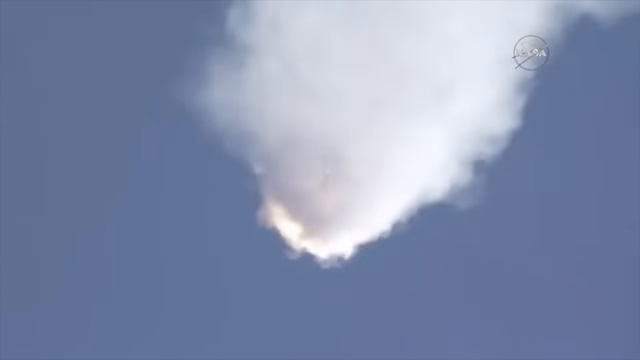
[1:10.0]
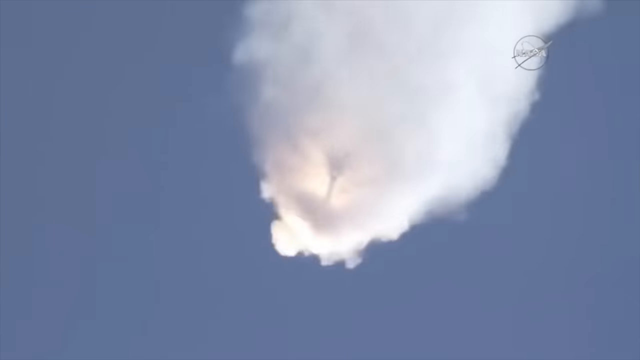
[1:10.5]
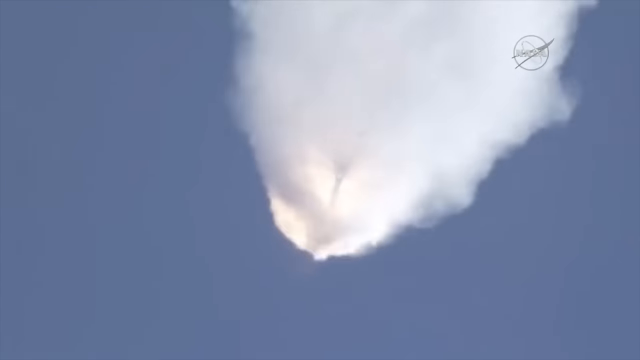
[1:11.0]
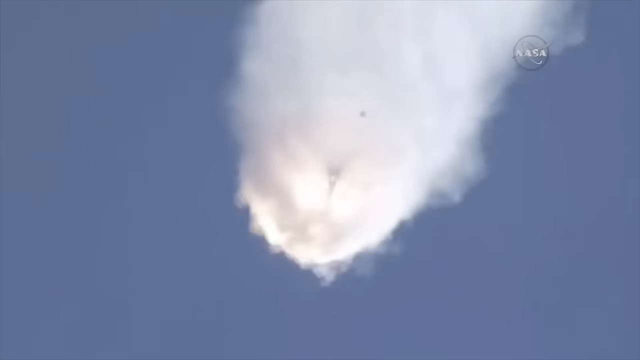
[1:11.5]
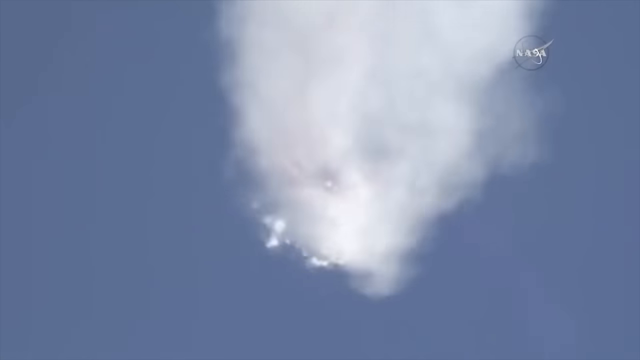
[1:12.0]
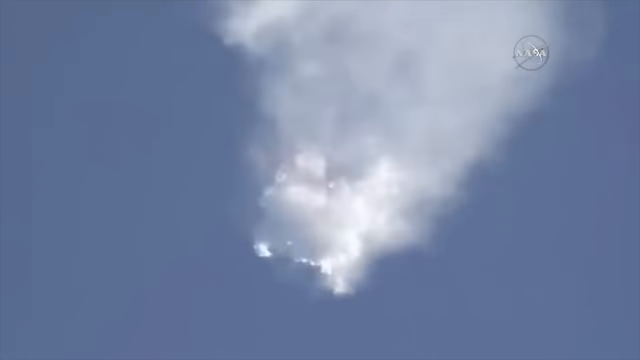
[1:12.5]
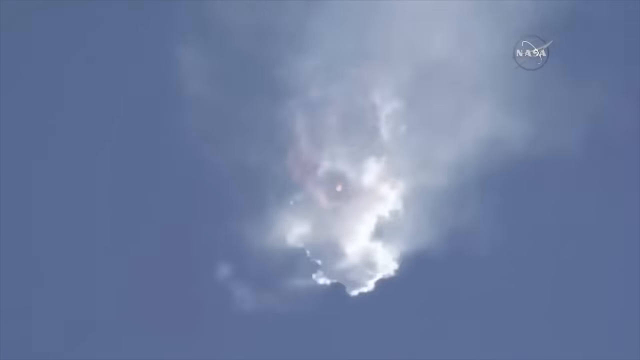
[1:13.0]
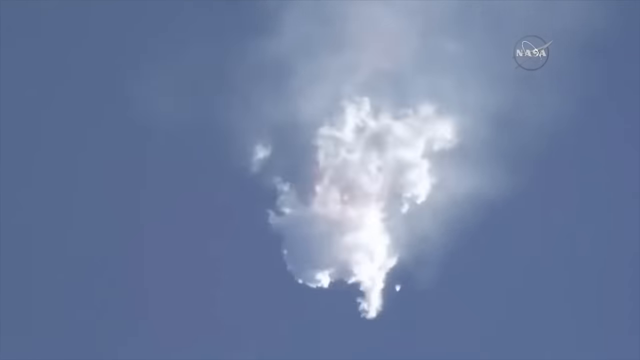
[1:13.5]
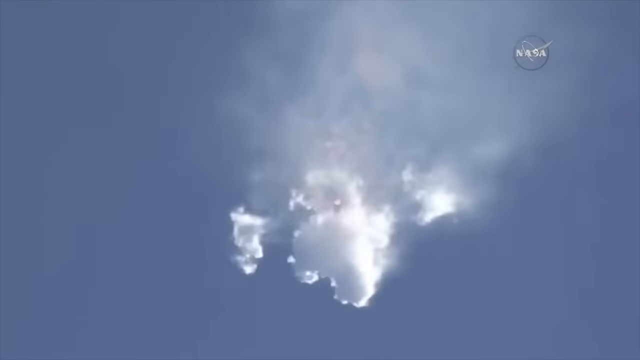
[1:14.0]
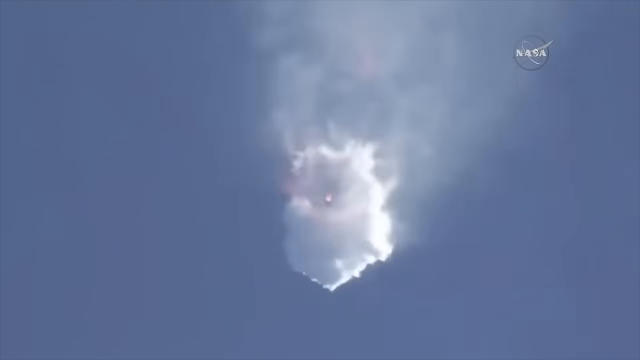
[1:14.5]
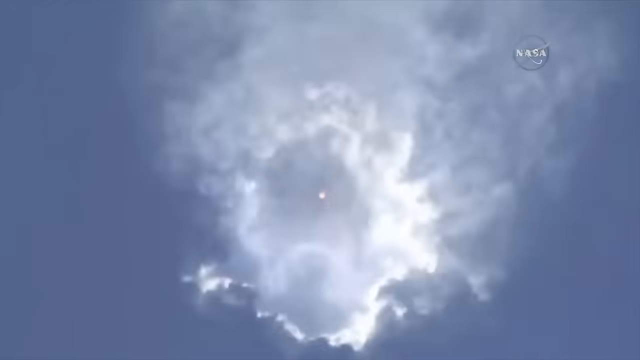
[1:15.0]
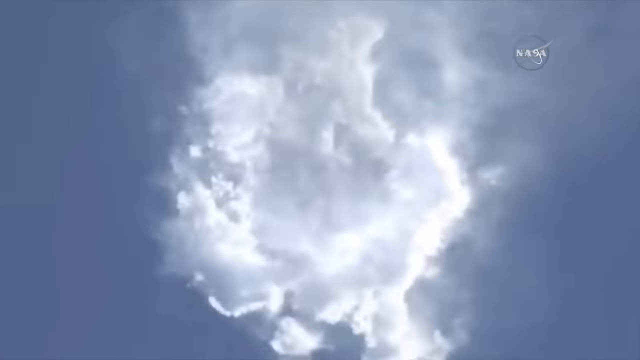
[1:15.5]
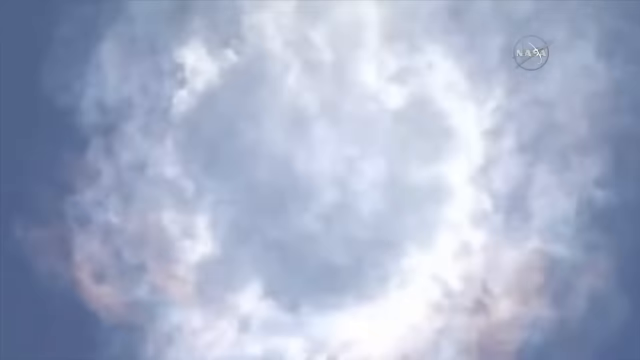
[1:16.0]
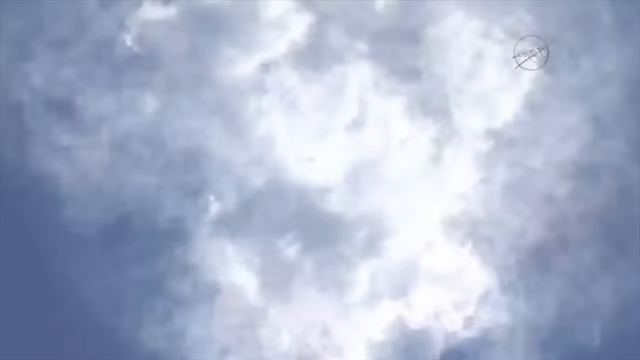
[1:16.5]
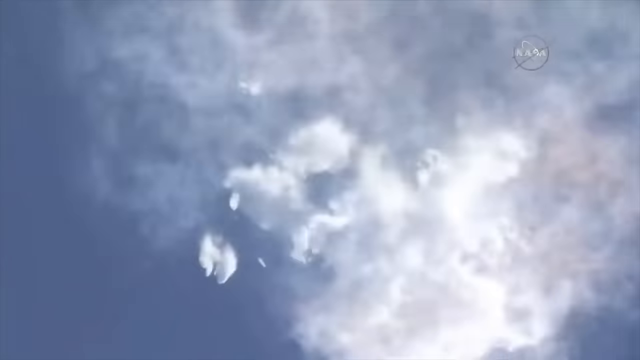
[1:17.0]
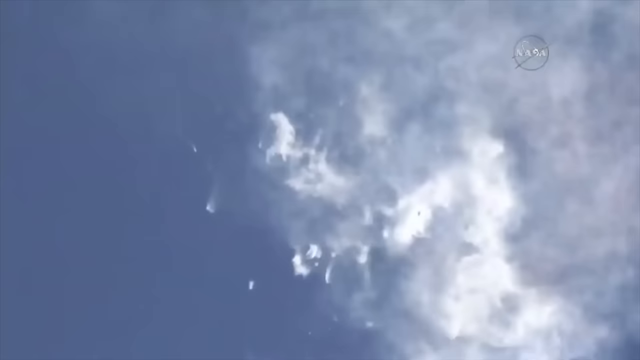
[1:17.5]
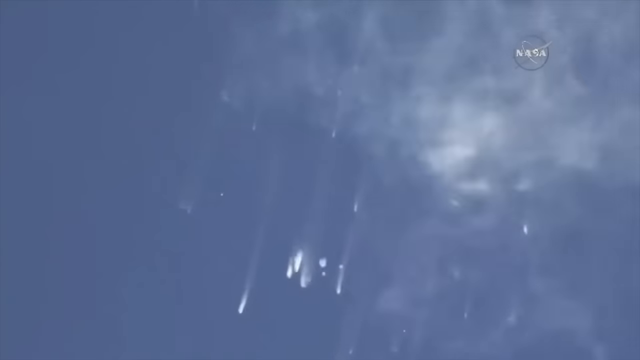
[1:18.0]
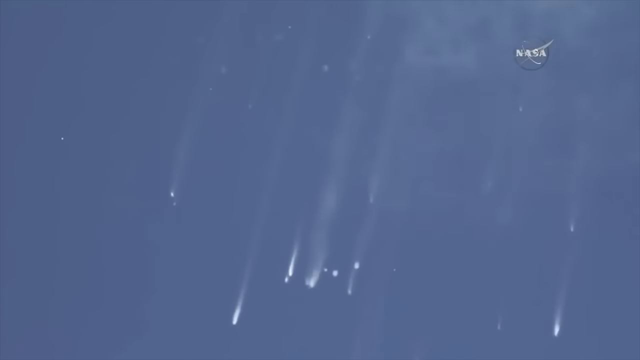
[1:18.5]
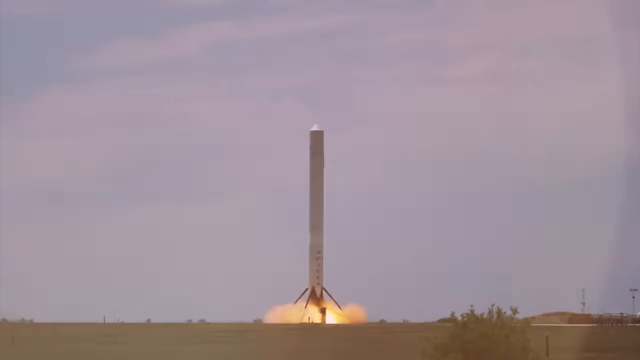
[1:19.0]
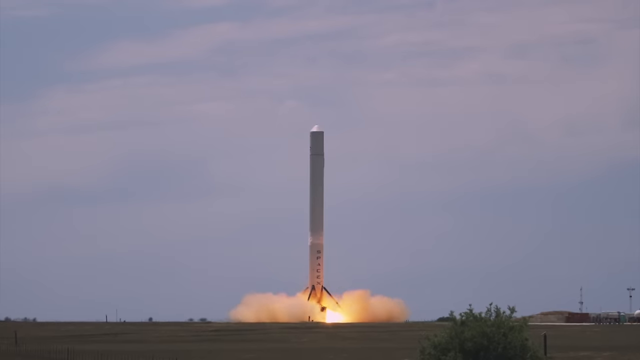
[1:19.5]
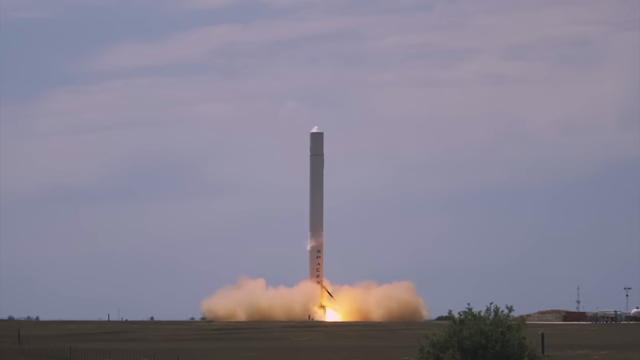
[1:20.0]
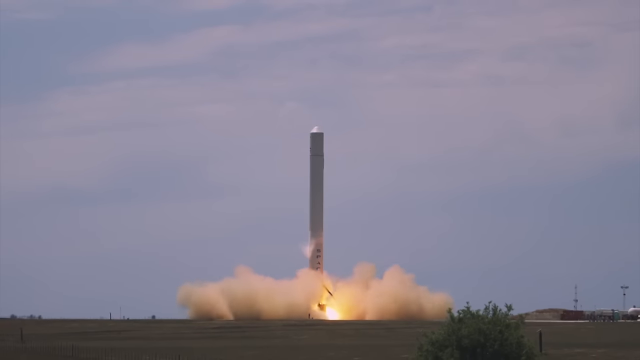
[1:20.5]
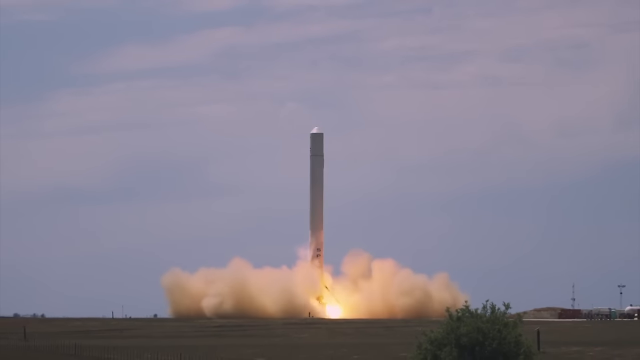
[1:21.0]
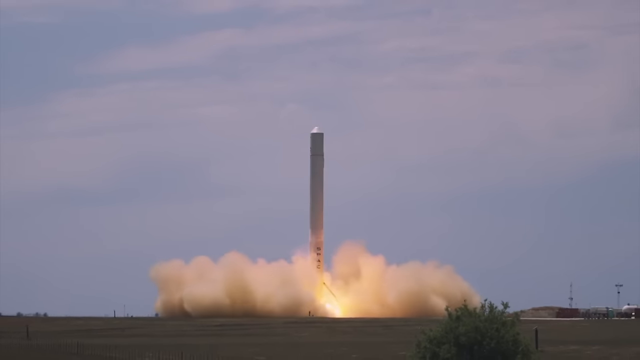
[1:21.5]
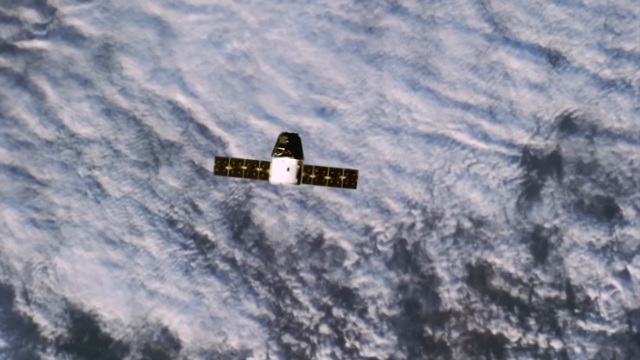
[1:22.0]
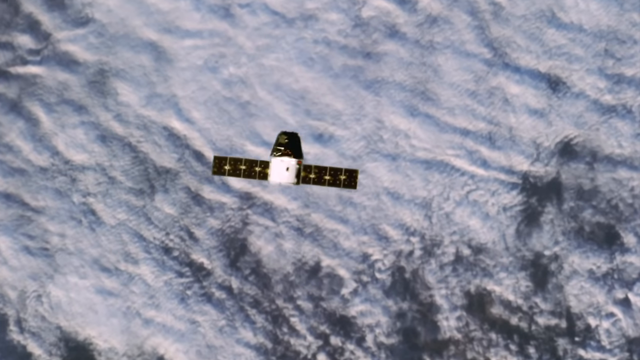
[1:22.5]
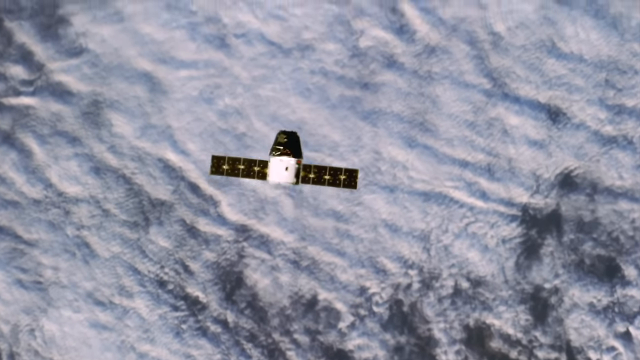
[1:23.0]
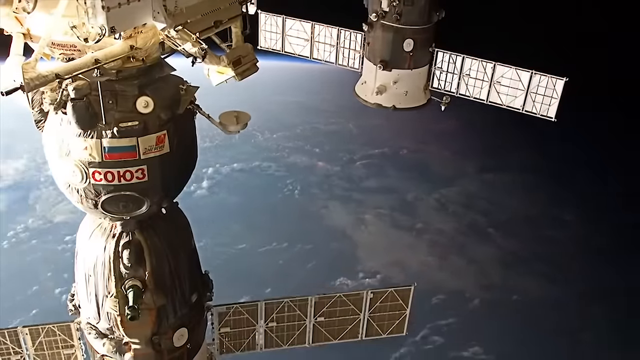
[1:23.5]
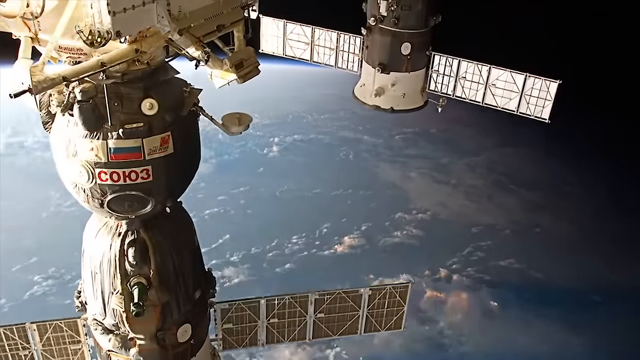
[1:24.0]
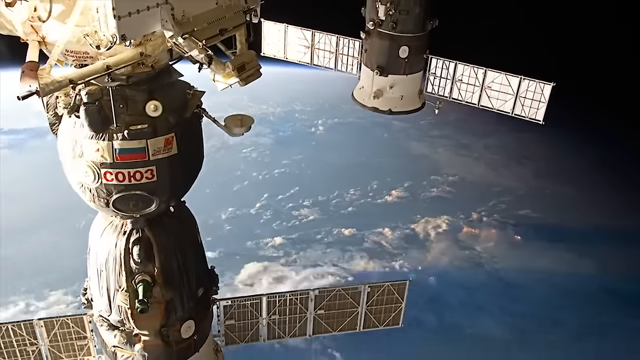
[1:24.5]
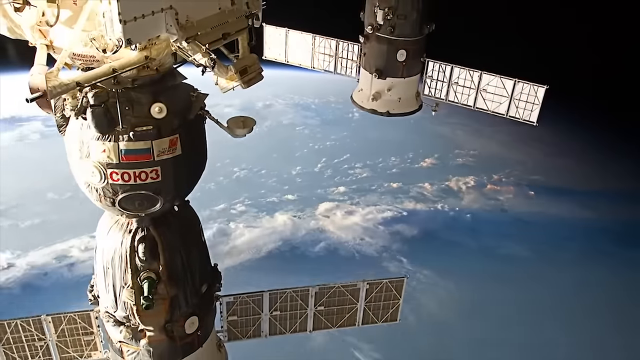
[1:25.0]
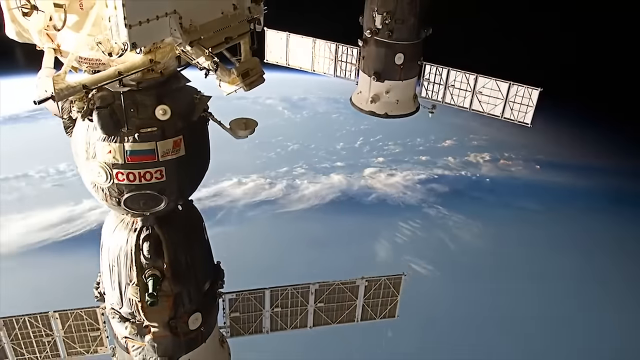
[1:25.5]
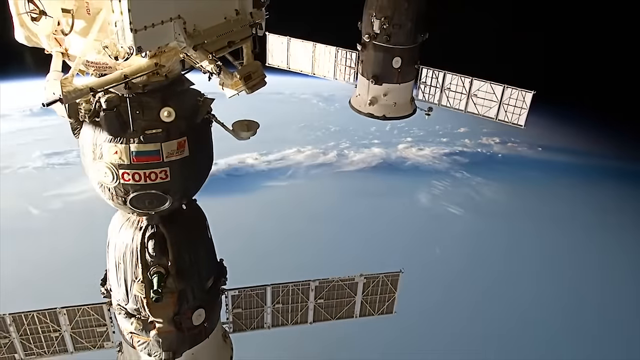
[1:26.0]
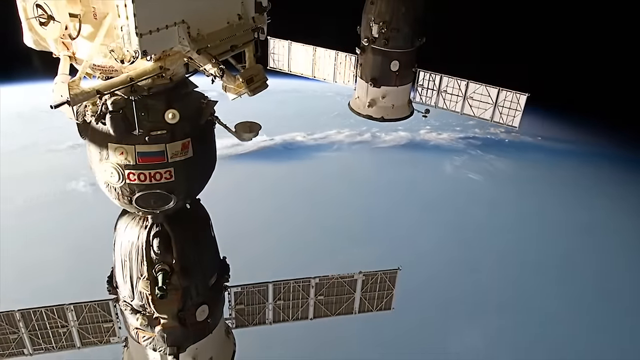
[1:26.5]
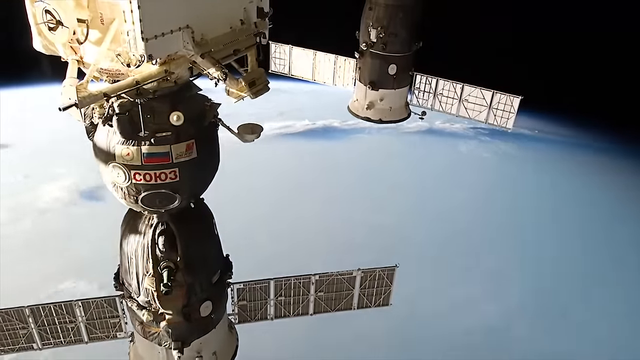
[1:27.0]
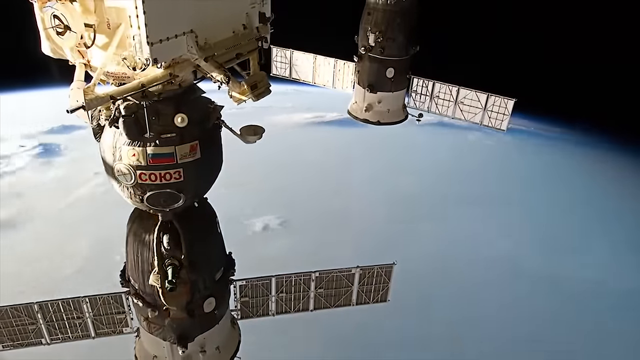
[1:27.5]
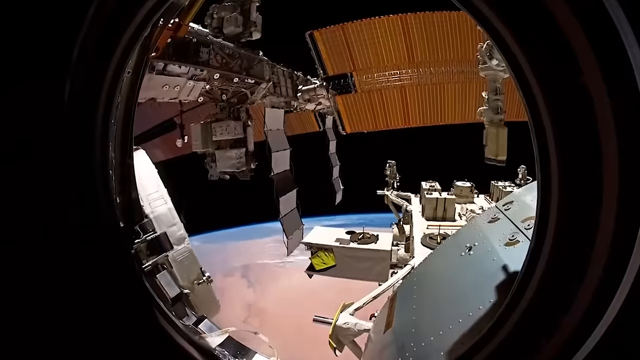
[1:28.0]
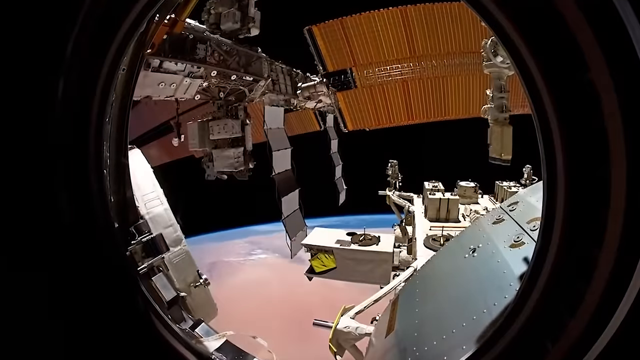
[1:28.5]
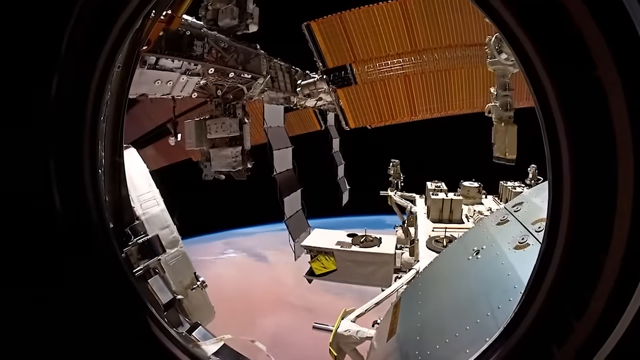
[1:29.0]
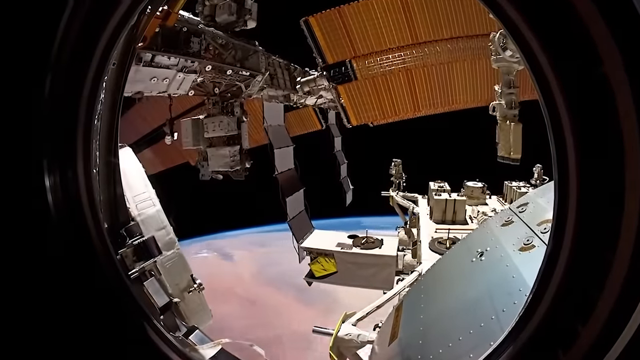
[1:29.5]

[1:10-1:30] Viewed from the bottom looking upward, a rocket flies away from the viewer toward the left. Suddenly a lot of white smoke bursts out of it until it is covered in white smoke, like a ball violently spewing smoke in all directions. All of a sudden it explodes, and it appears to become a lot of little white debris falling toward the bottom left. Another shot shows what looks like a rocket in the middle of the frame, pointing upward, taking off as fire starts blowing up below it. The scene changes to what seems to be a view of the top of a satellite floating over the Earth with a lot of cloud below. The satellite has two solar panels coming out of it and looks like a cylinder with a little black tip. The perspective changes again to a view of the satellite with the Earth underneath it, just floating there. The satellite looks like three tubes, with solar panels at the bottom left, two panels on the left and right, and another two solar panels at the top right. Below, the Earth appears to rotate away from the viewer and to the right. Another shot looks like a view out of a circular spaceship window into outer space, with black at the sides. Through the window the Earth is at the bottom, with satellite parts, solar panels, arms and other things outside, and the Earth appears to spin to the left underneath.